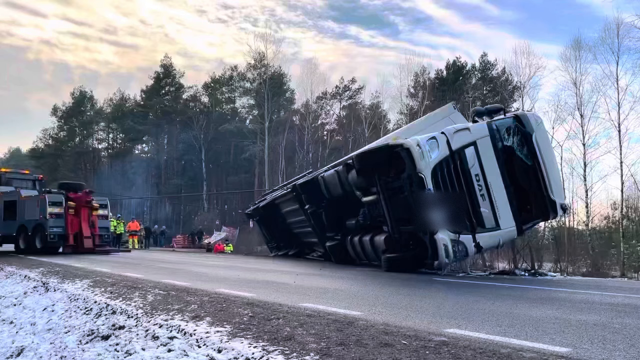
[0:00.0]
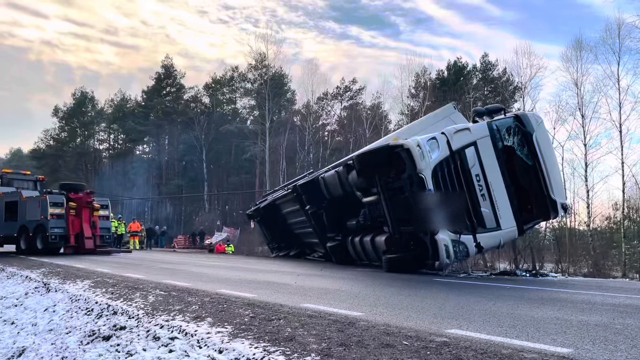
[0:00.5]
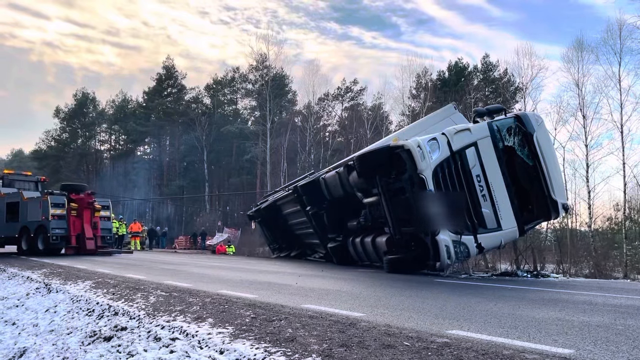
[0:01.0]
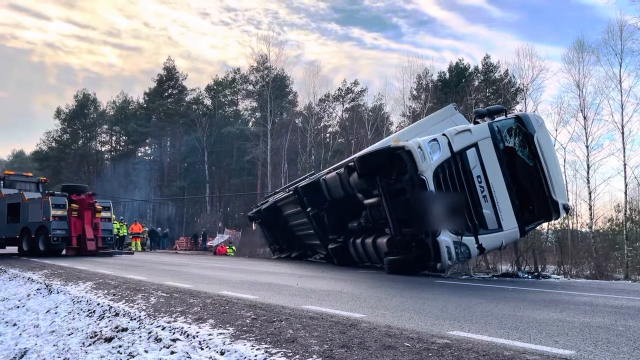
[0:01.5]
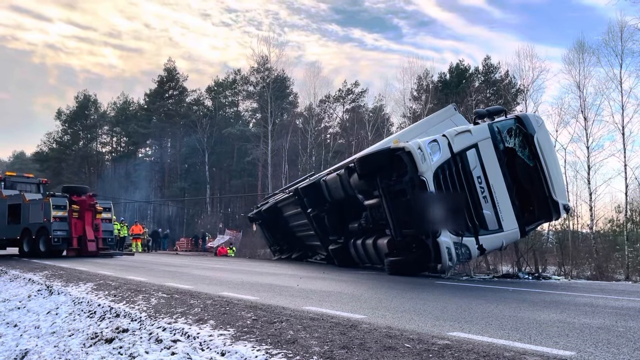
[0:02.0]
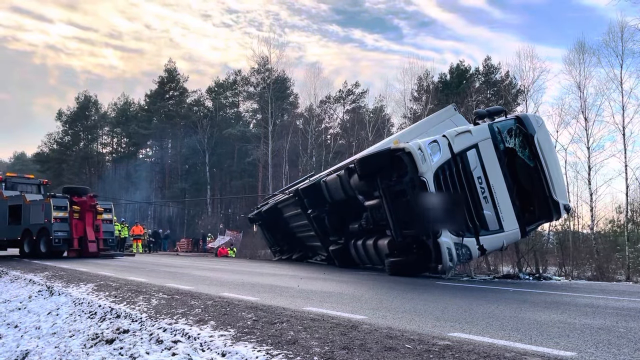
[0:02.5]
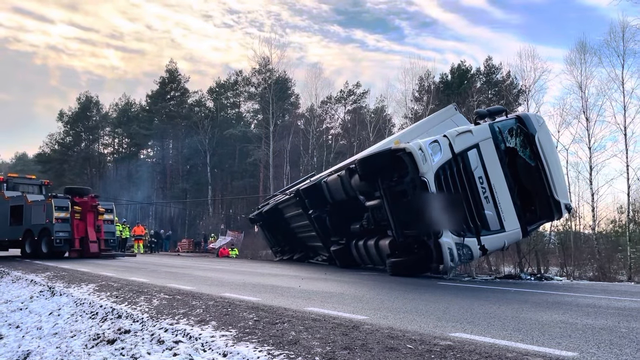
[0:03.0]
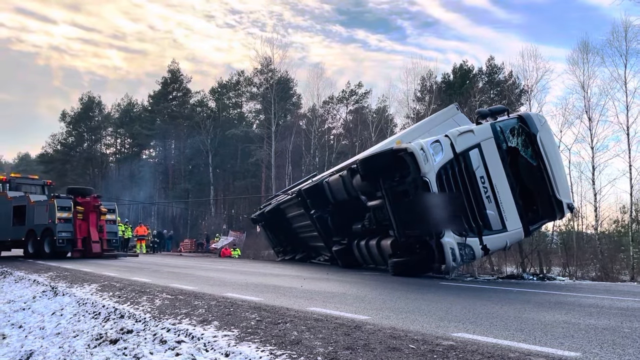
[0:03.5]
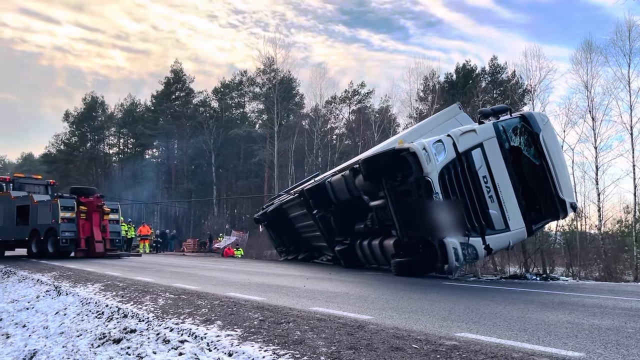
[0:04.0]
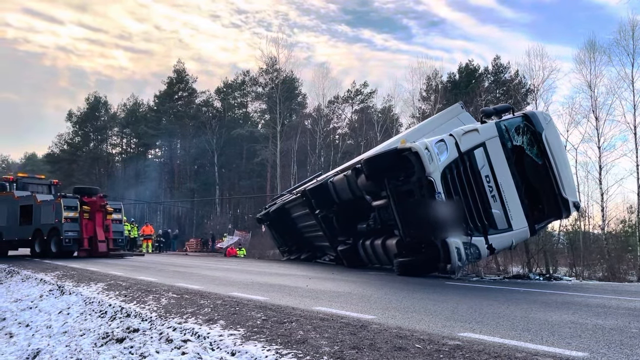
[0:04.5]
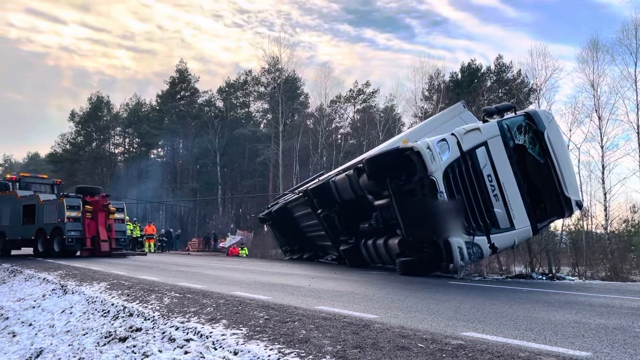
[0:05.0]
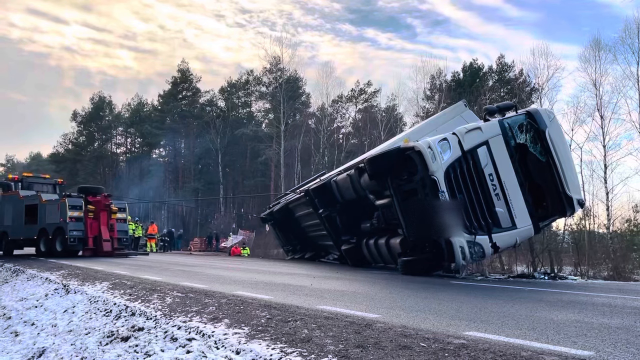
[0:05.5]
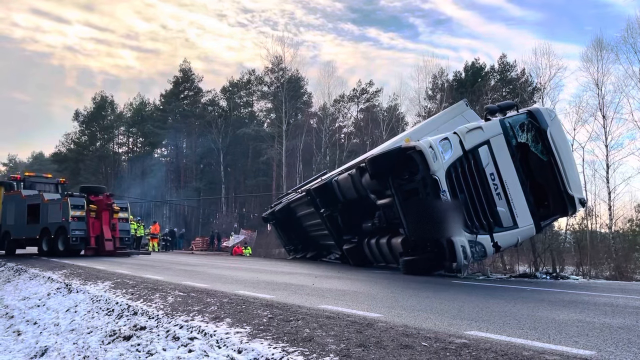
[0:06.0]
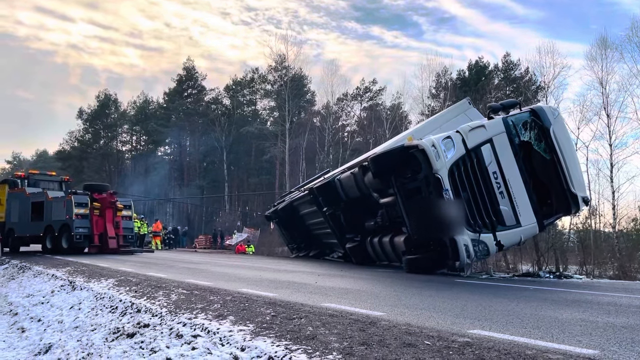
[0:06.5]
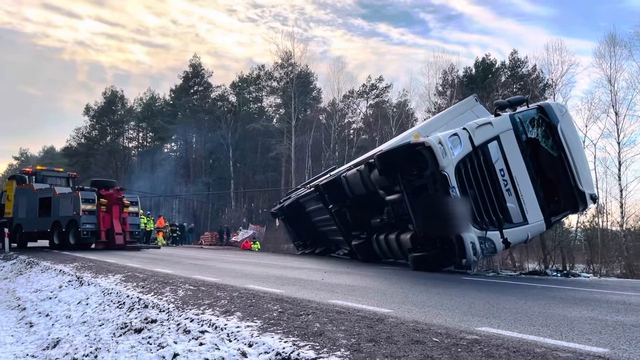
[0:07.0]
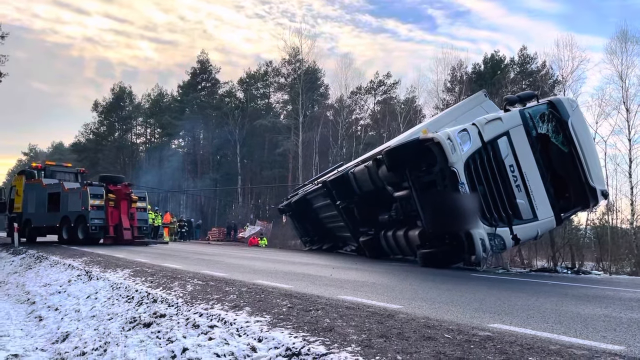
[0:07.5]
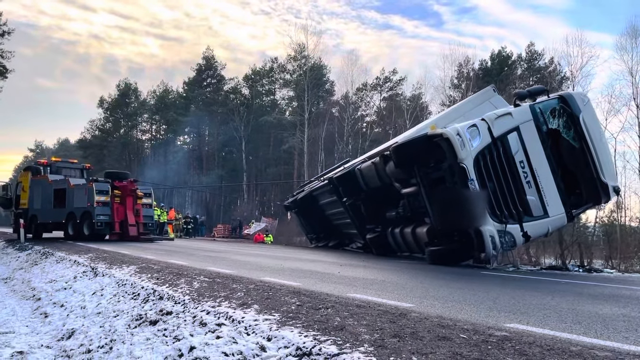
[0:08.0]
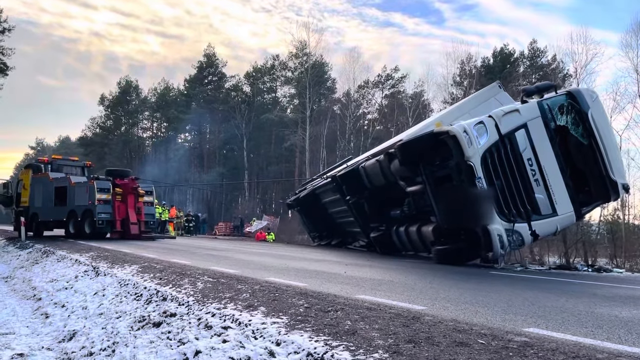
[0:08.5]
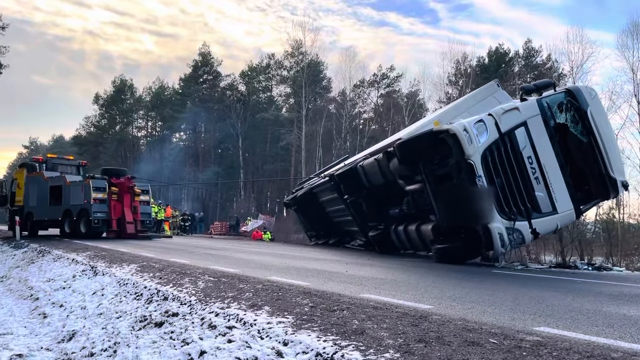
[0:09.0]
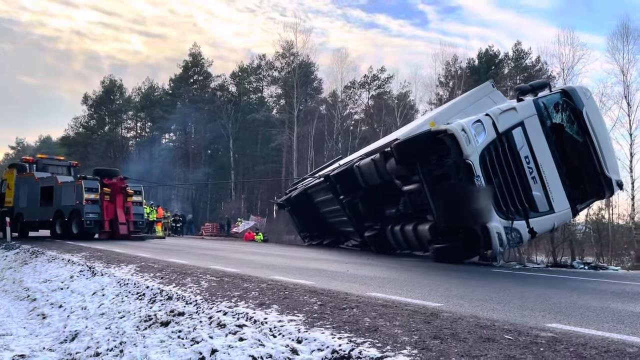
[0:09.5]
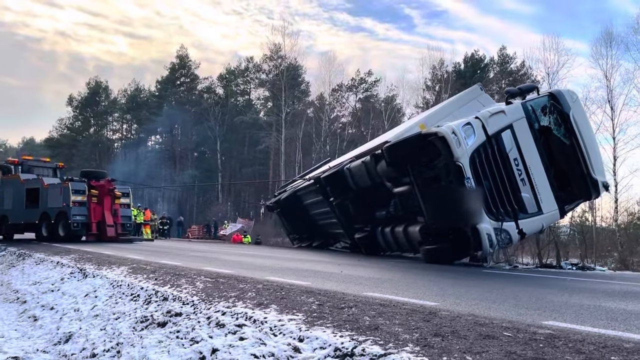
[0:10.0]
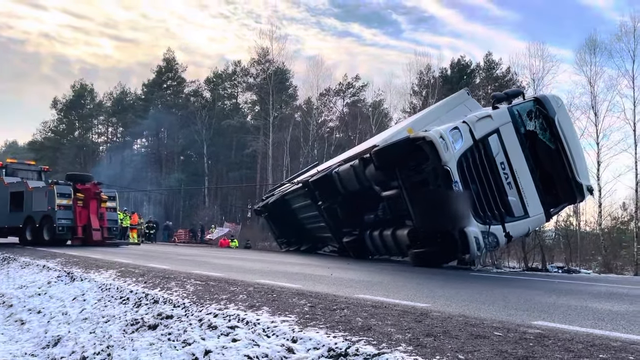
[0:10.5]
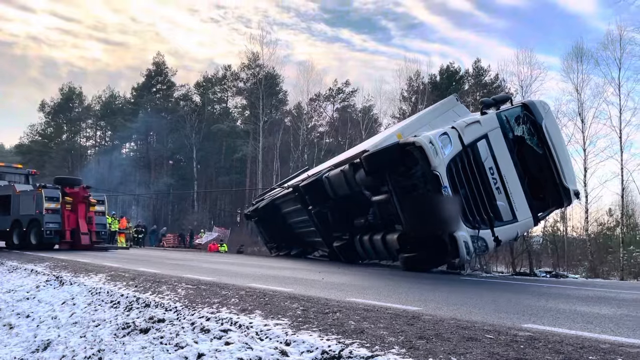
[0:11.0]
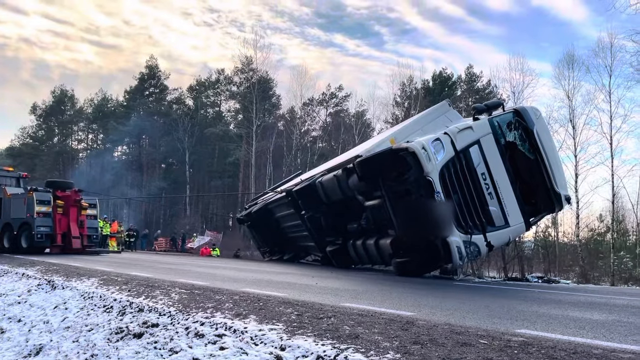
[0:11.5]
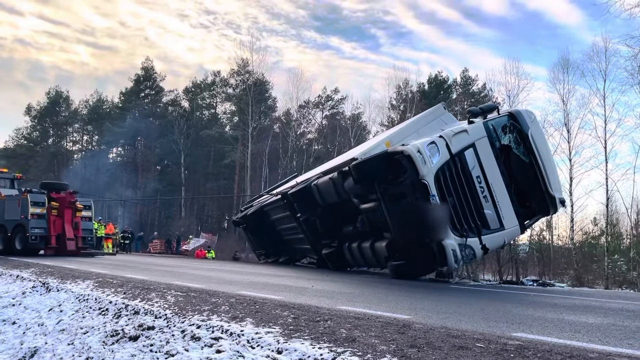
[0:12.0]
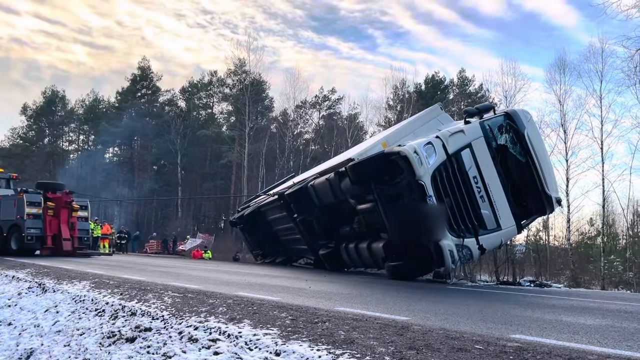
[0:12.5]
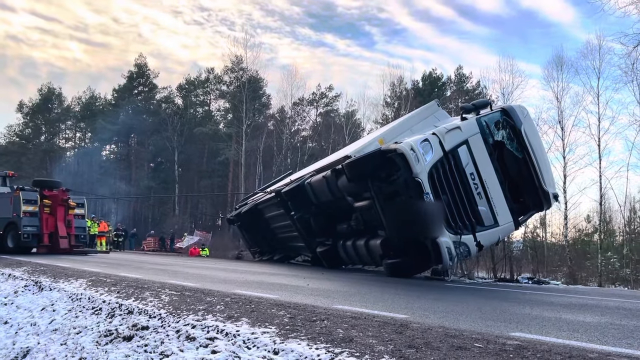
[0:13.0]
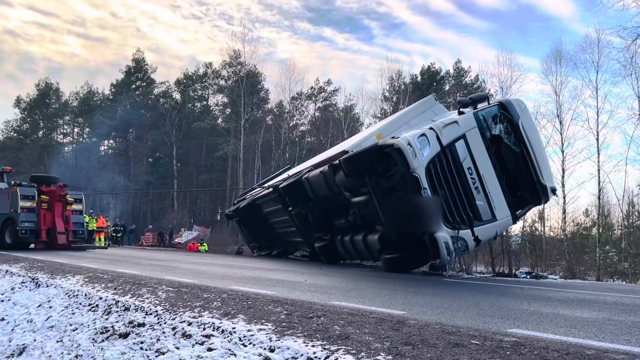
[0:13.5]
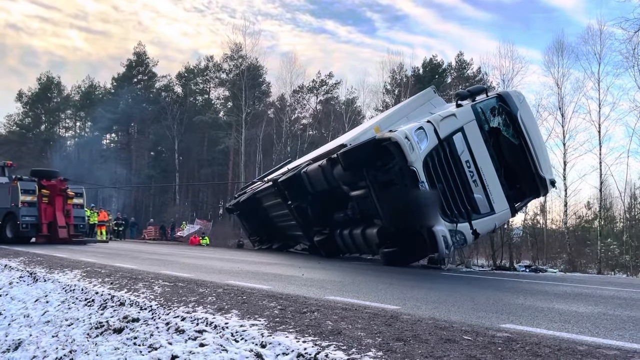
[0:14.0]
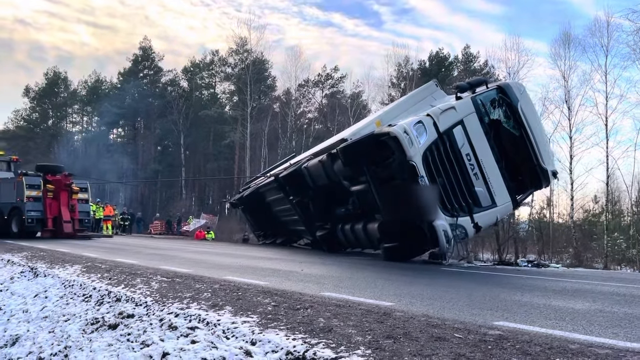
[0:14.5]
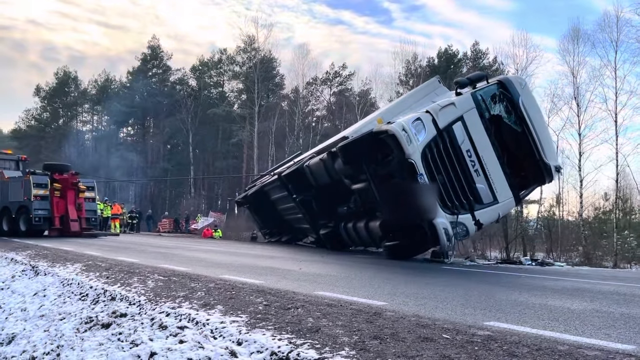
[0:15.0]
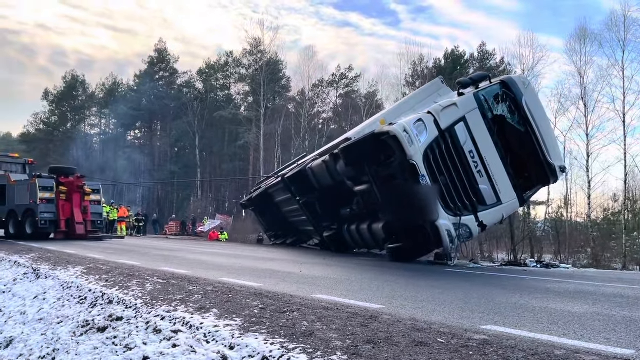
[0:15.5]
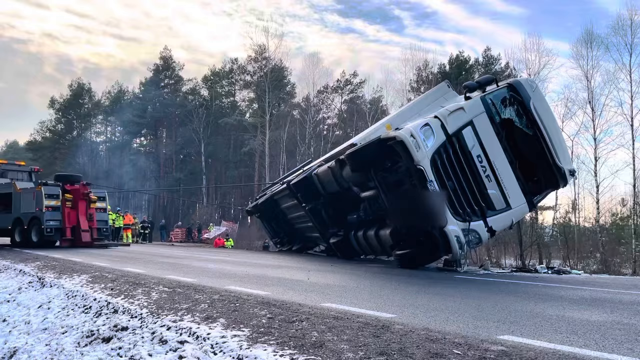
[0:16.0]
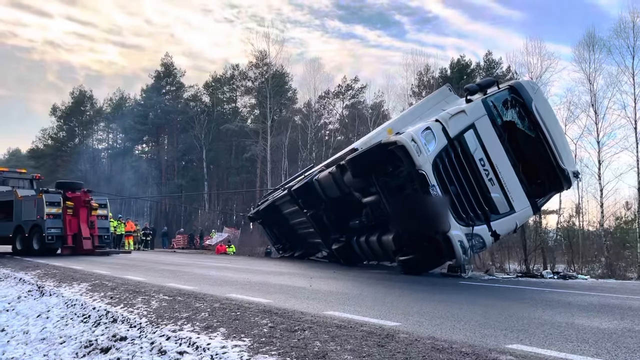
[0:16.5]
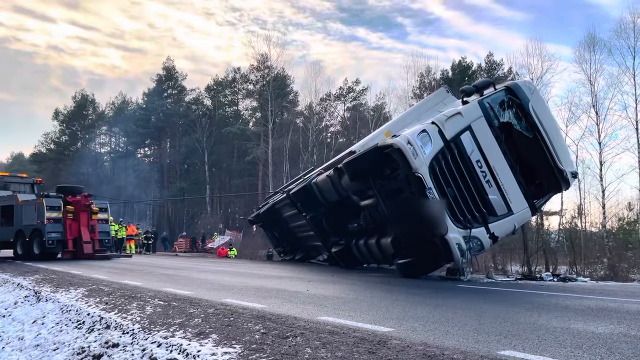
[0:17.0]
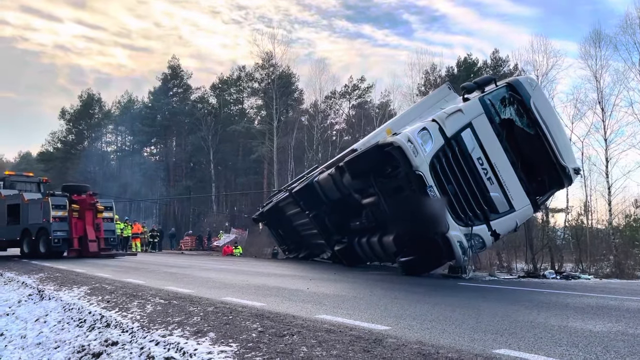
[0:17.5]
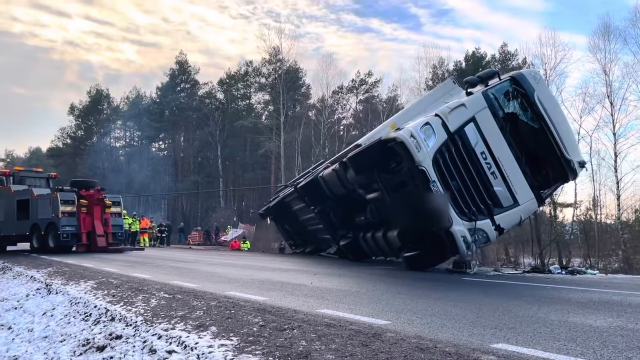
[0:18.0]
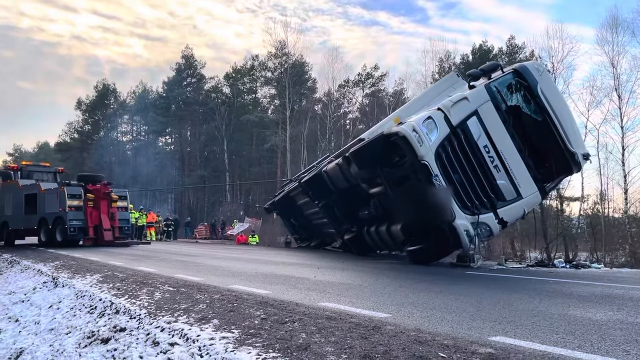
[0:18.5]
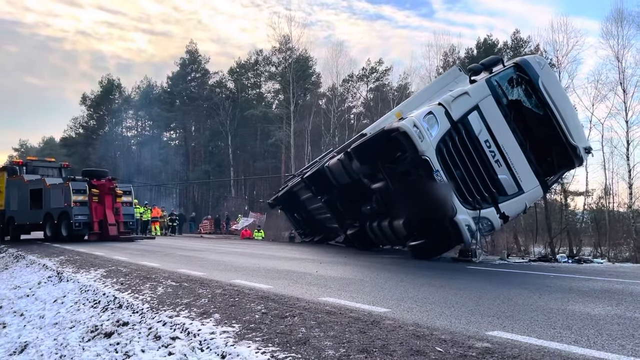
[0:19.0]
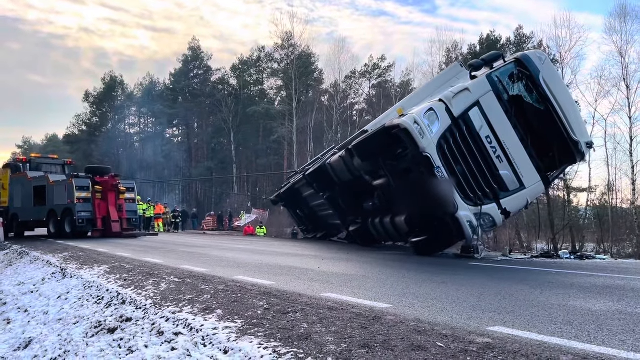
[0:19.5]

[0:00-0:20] An accident of some kind is shown: a white semi-rig truck is over almost fully on its side. Mechanisms like those on a tow truck, with a huge winch and a large cable, may or may not be trying to right the truck, and on close watching they do seem to be moving it back onto the road, so that its tires will be underneath the truck rather than at its side. To the left, a group of men stands fairly well away from the truck, wearing bright neon uniforms in orange and yellow. Lower down near the back of the truck, another group of men appears to be down an embankment; they are visible from the waist up and look on as this happens. The skies are somewhat cloudy and overcast.